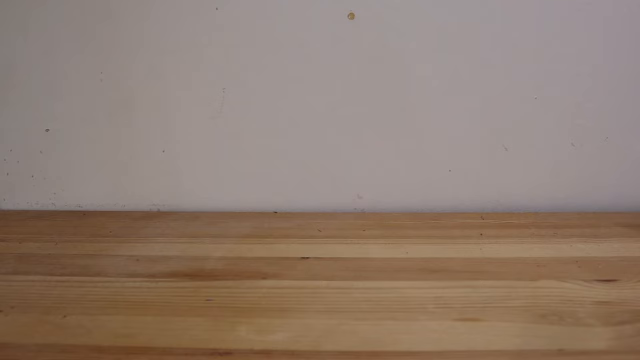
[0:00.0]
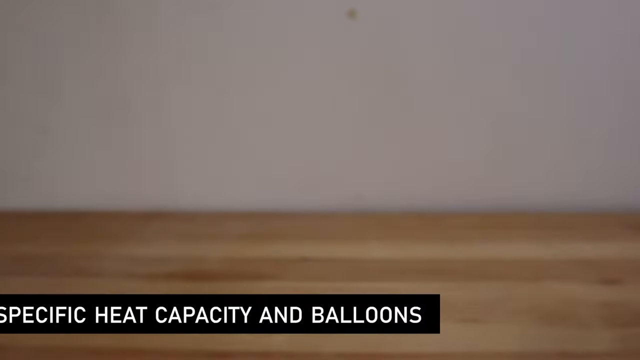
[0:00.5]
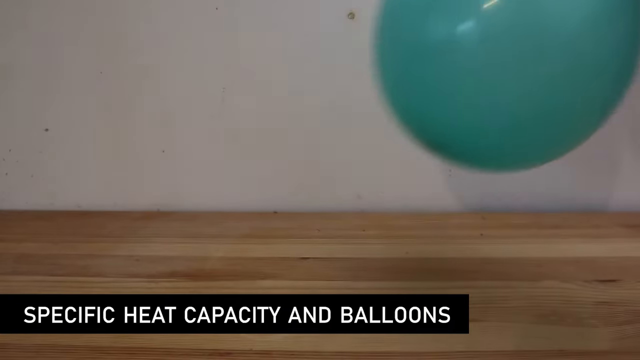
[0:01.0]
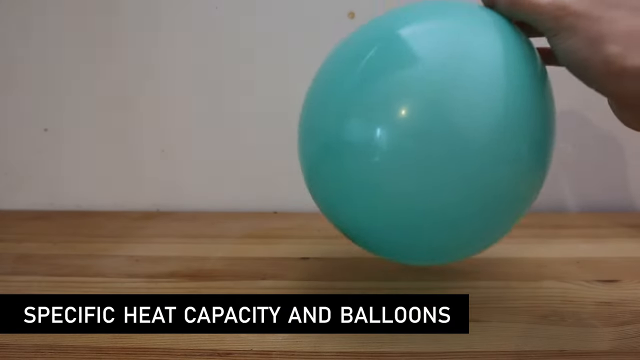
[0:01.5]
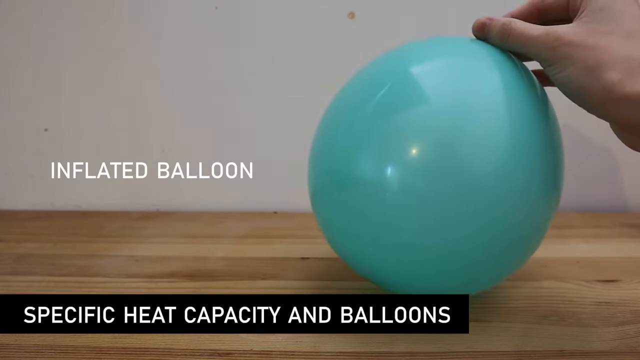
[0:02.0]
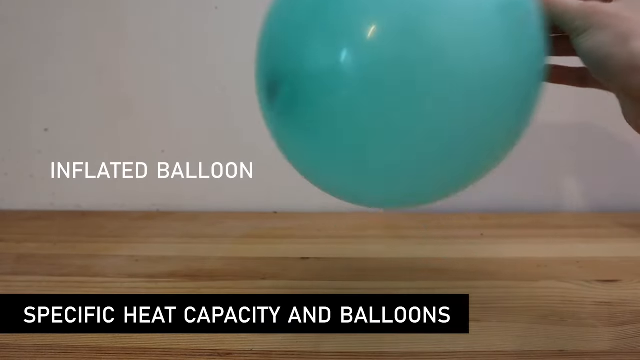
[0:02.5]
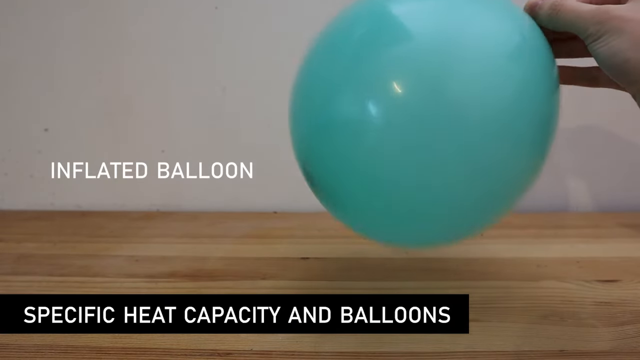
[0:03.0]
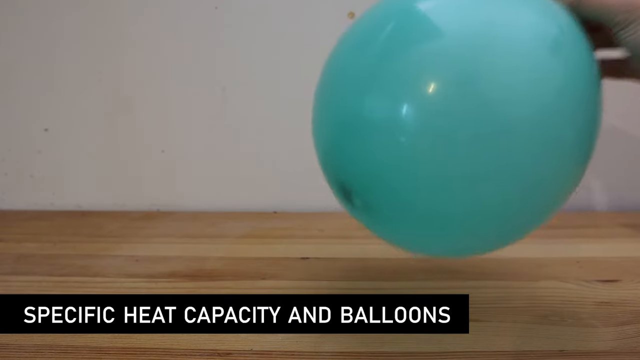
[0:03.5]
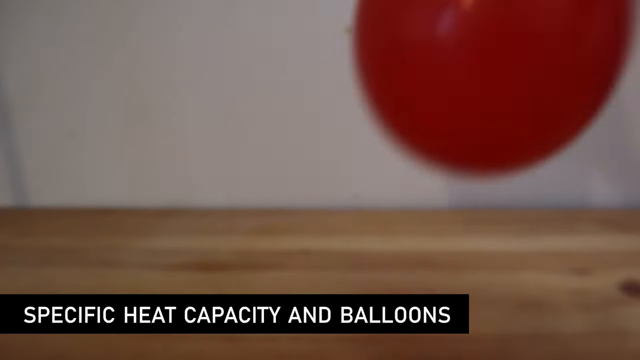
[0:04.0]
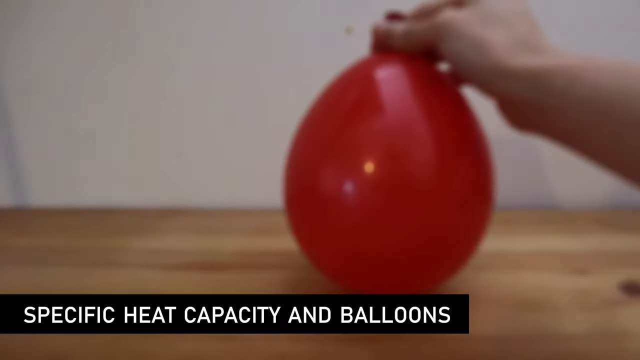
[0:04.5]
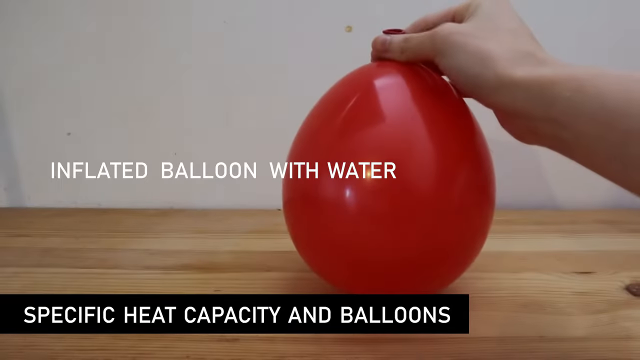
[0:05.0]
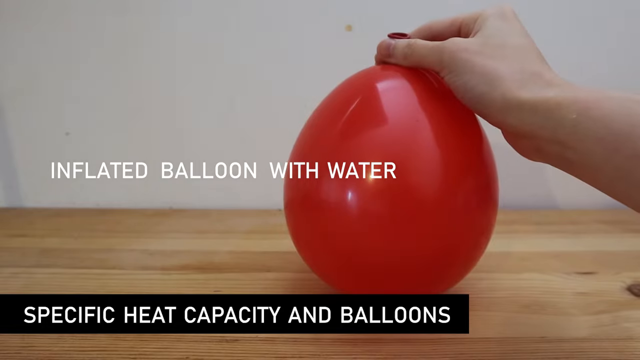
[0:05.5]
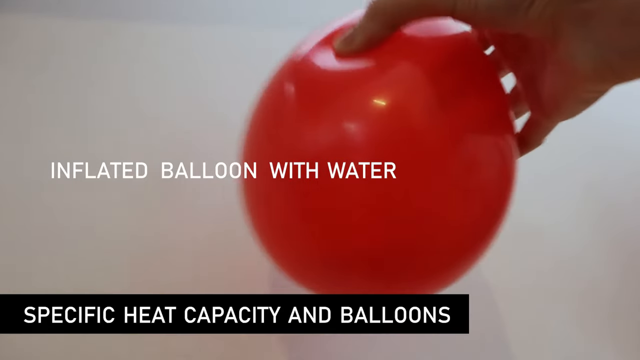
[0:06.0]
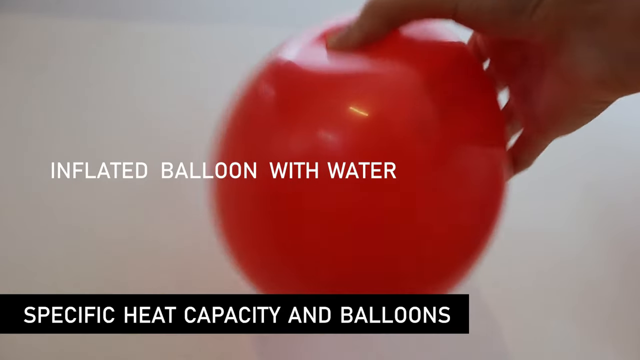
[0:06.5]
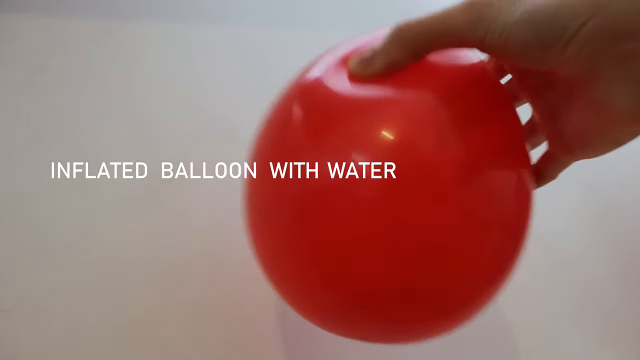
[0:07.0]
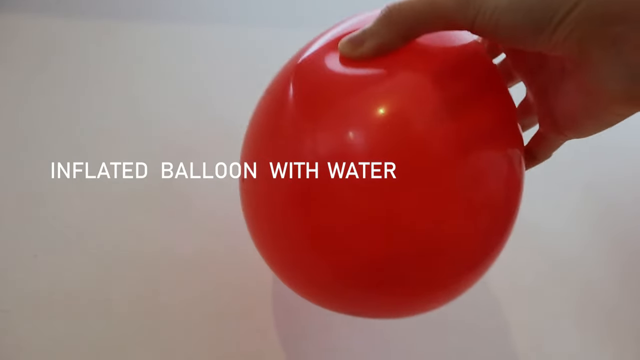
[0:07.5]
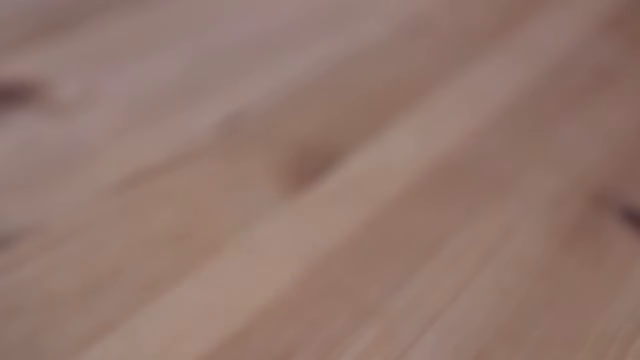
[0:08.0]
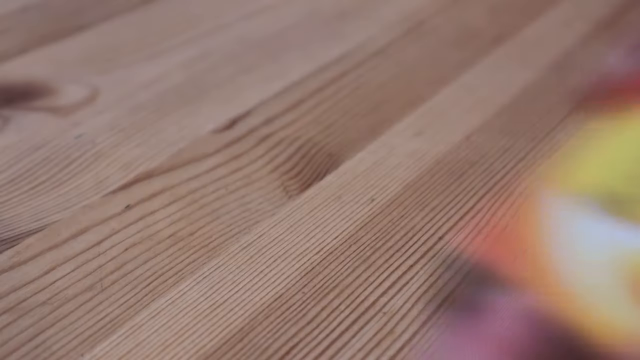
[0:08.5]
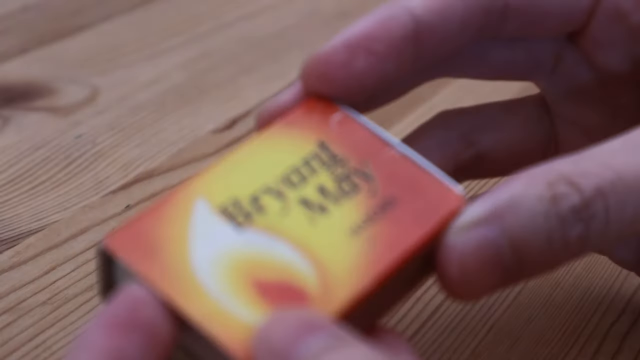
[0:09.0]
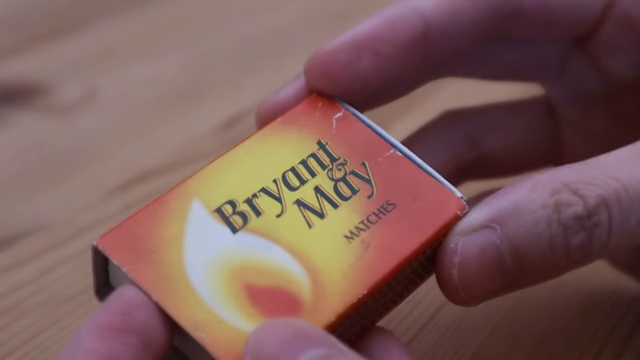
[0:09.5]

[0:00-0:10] A wooden surface stands against a white wall; it is brown with some light brown here and there and has a wood texture. Text at the bottom of the screen reads "specific heat capacity and balloons". A person's right hand, coming in from the right side of the frame, holds an inflated green balloon, and text to the right of the balloon reads "inflated balloon". The person places another balloon on the table and removes the green one. Holding this second balloon by its tip, the text reads "inflated balloon with water"; this balloon is also inflated but has water inside it. The person shakes the balloon quite a bit, and the text disappears.